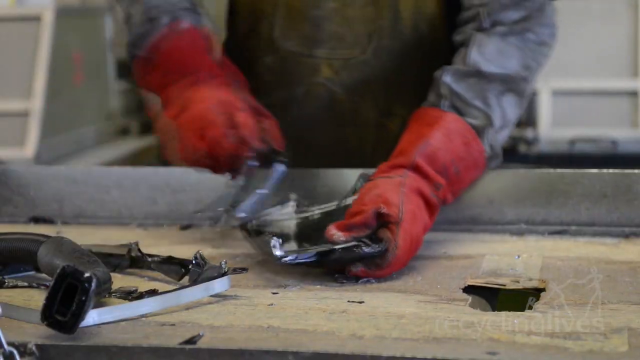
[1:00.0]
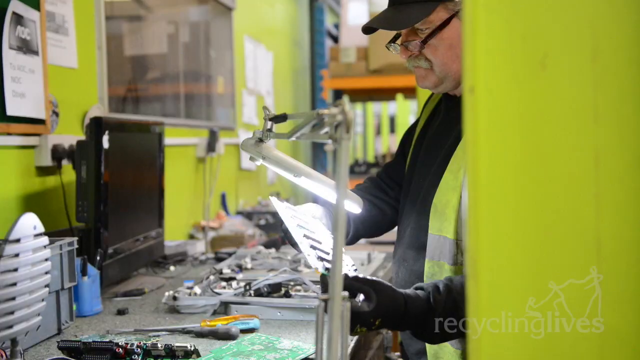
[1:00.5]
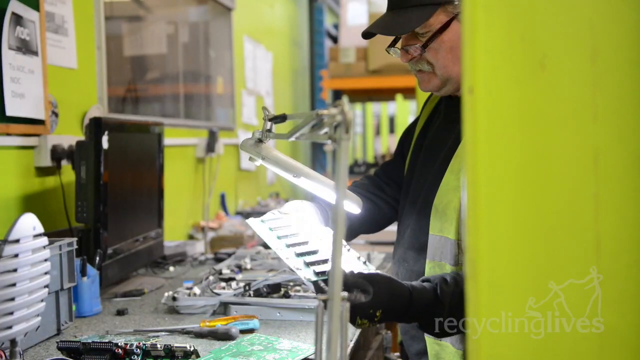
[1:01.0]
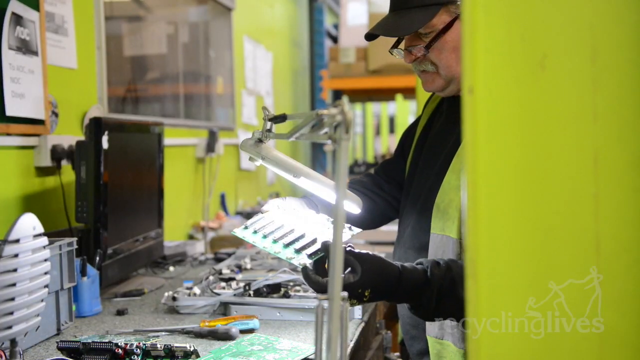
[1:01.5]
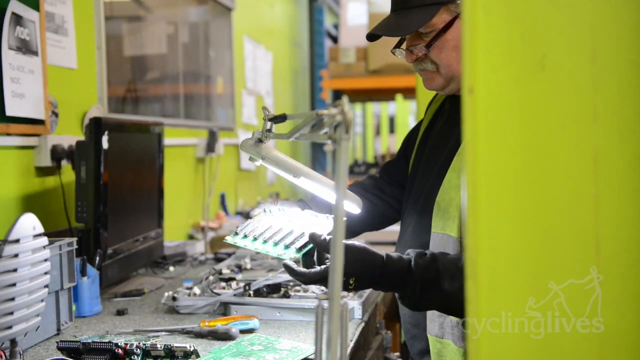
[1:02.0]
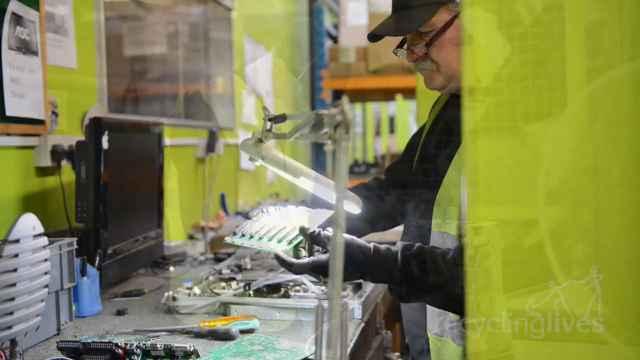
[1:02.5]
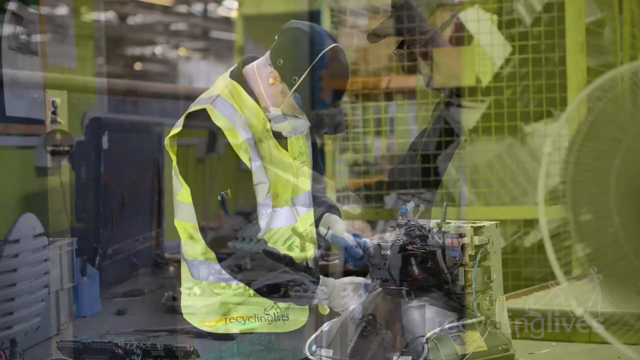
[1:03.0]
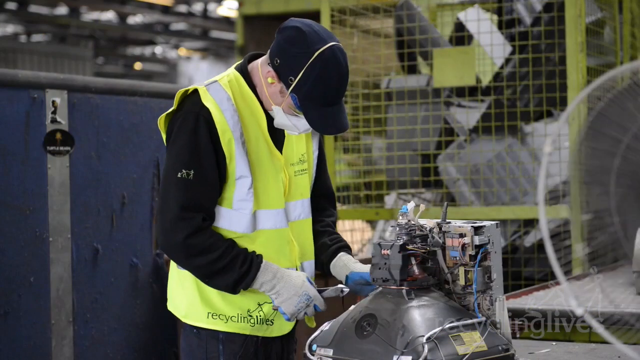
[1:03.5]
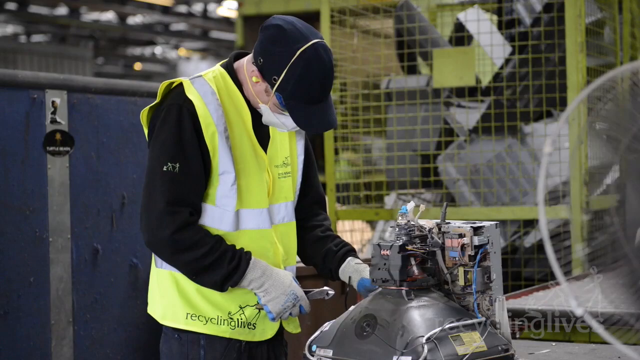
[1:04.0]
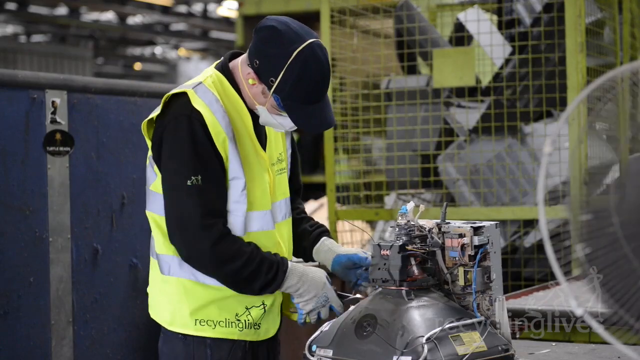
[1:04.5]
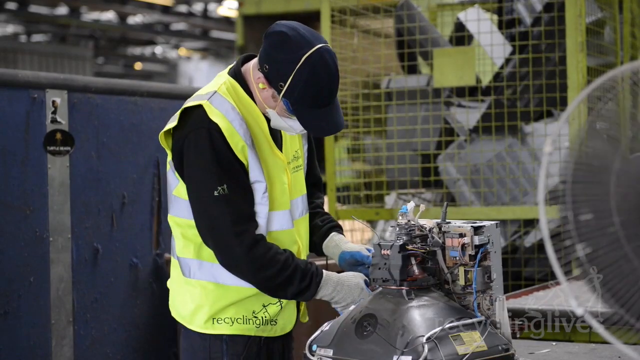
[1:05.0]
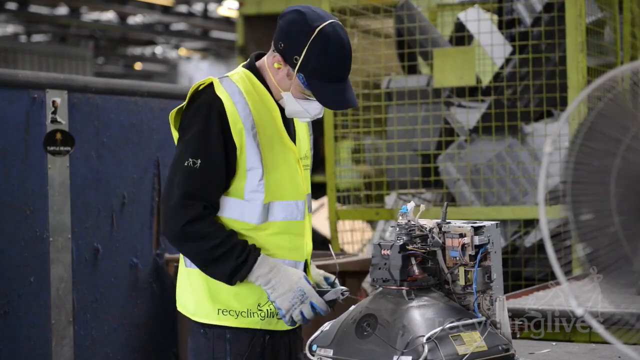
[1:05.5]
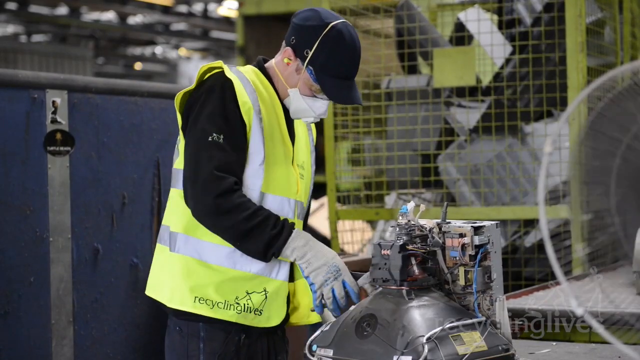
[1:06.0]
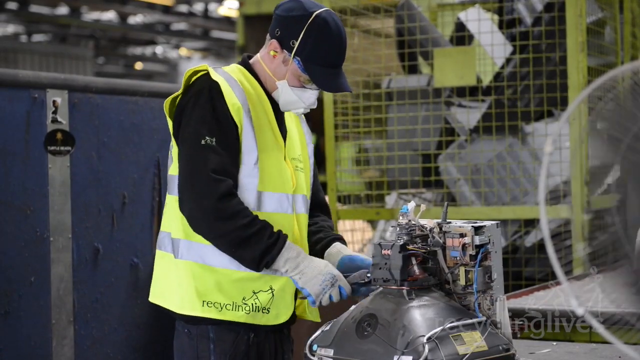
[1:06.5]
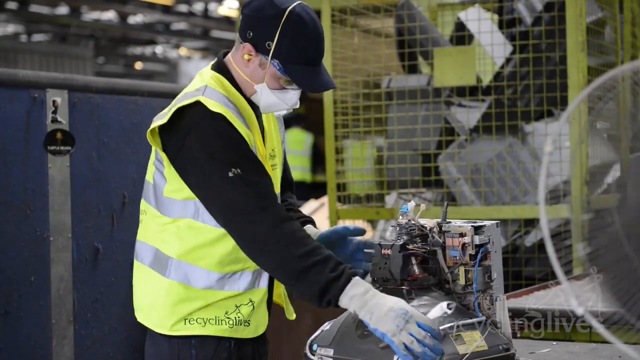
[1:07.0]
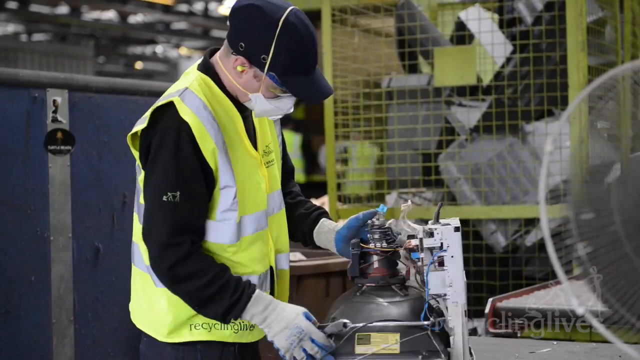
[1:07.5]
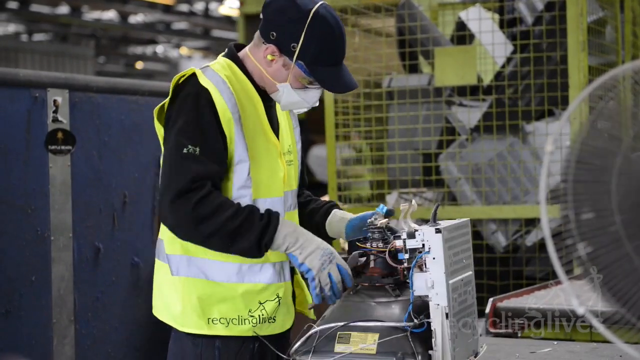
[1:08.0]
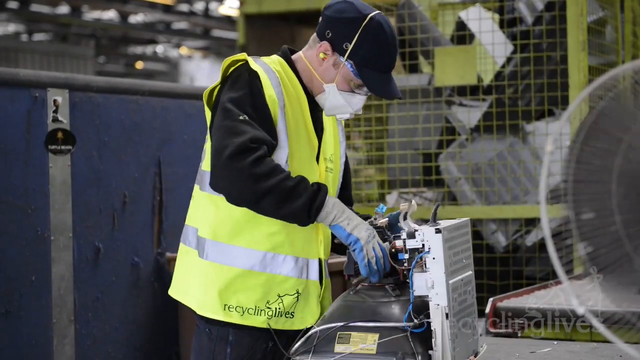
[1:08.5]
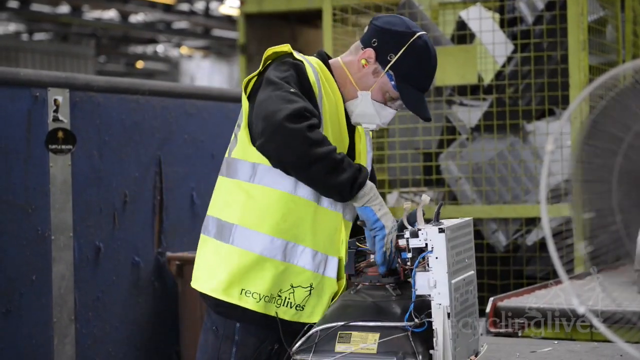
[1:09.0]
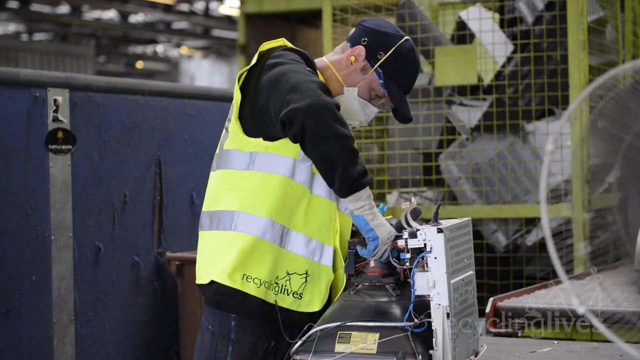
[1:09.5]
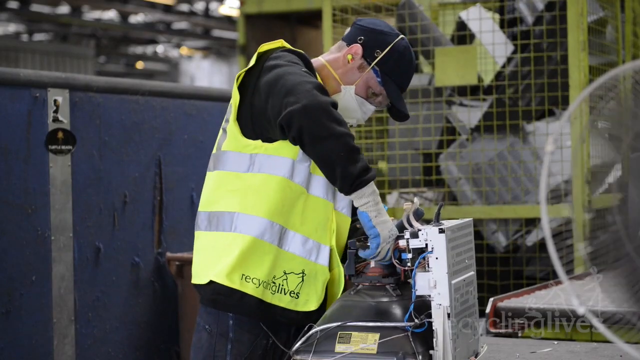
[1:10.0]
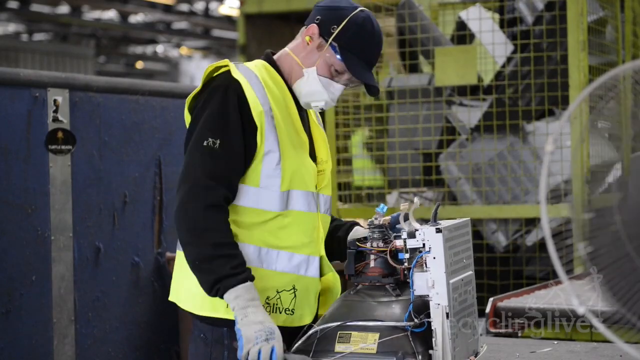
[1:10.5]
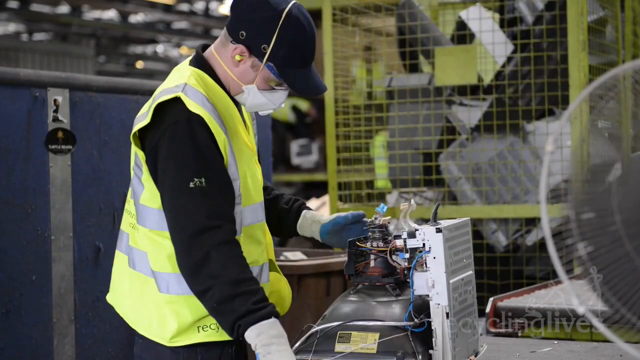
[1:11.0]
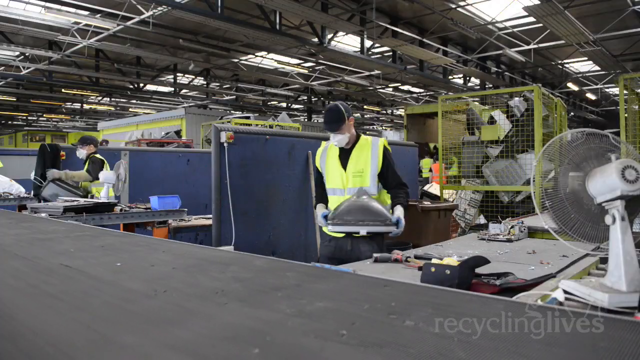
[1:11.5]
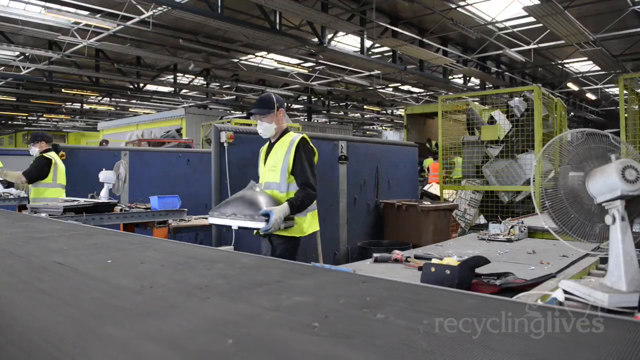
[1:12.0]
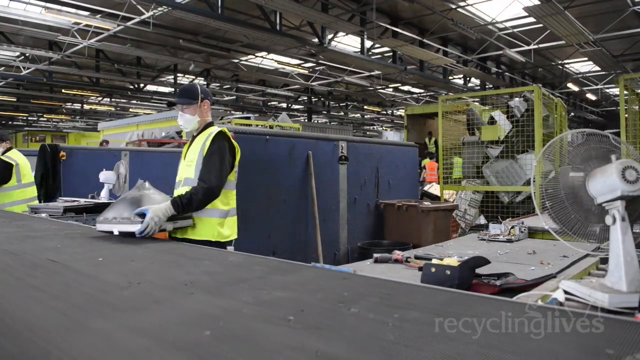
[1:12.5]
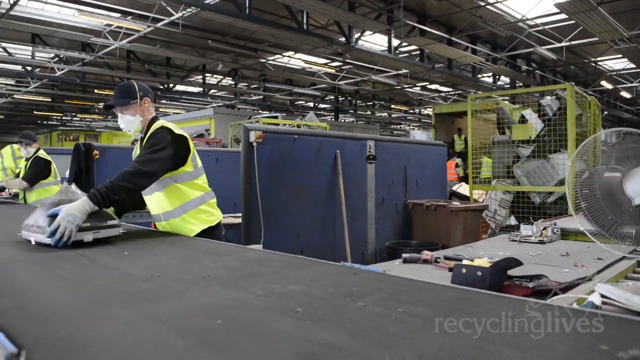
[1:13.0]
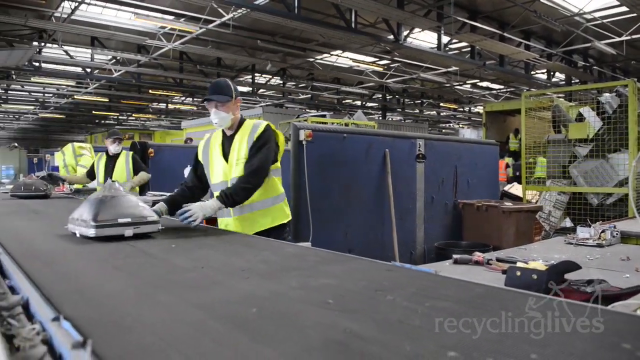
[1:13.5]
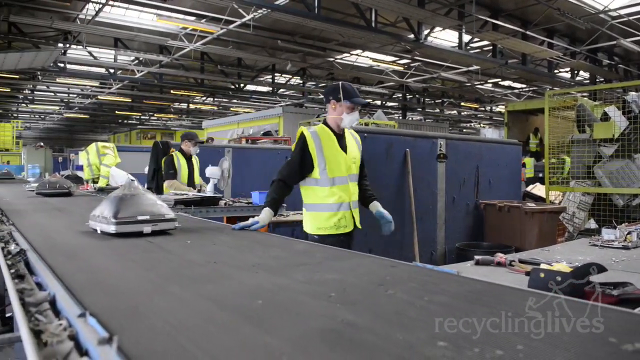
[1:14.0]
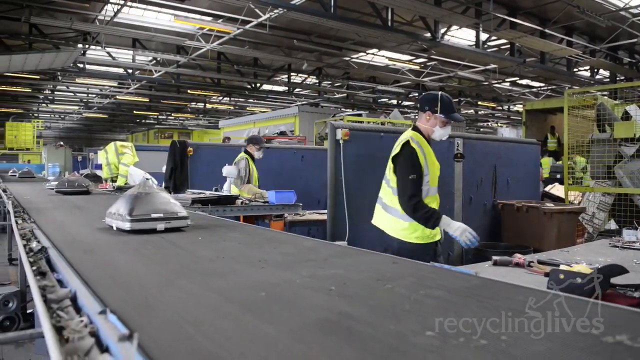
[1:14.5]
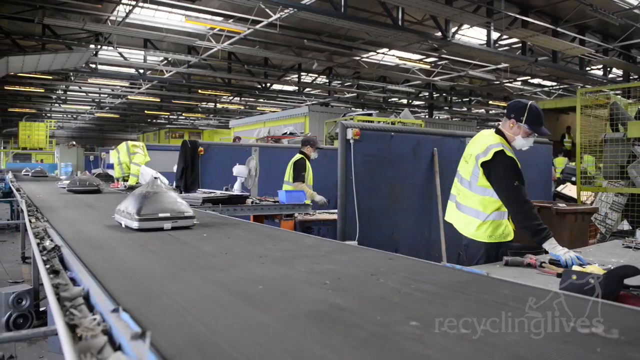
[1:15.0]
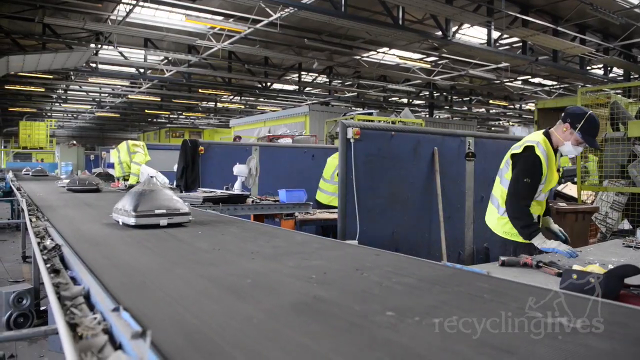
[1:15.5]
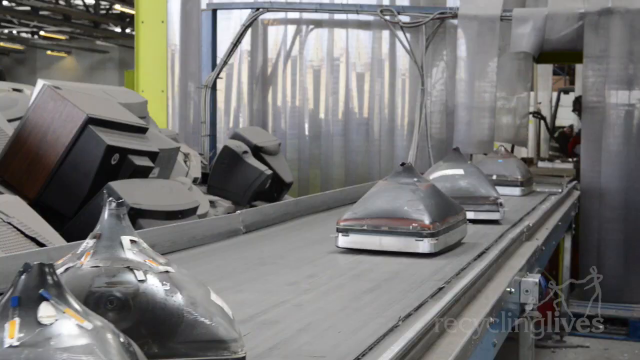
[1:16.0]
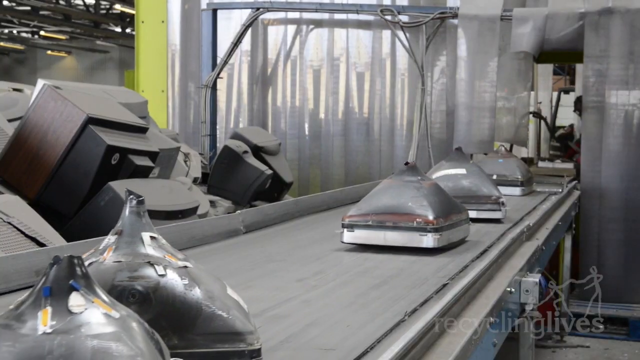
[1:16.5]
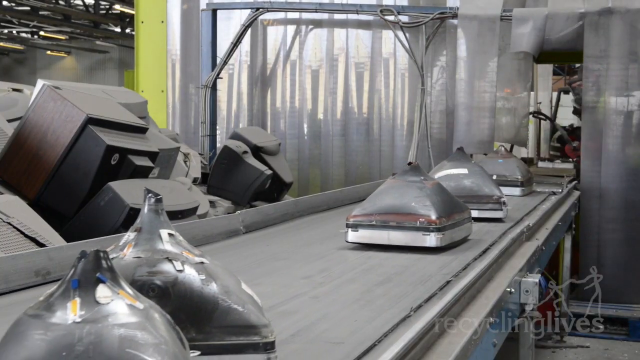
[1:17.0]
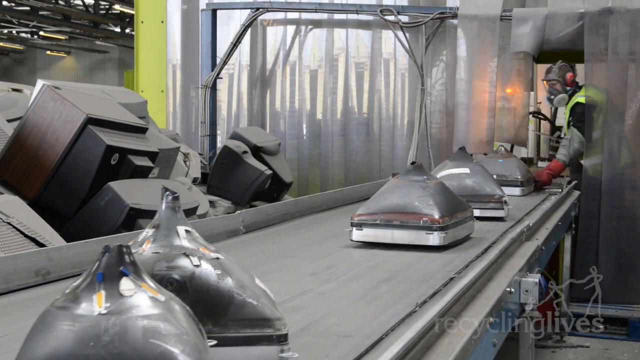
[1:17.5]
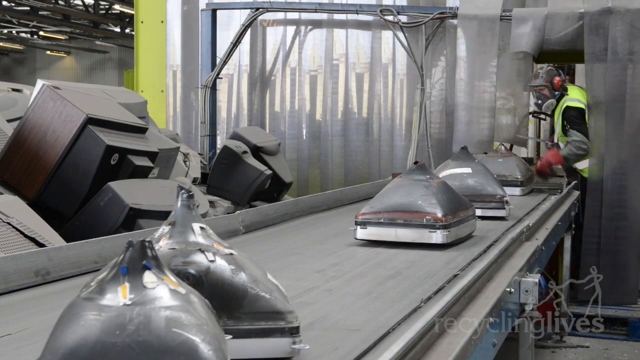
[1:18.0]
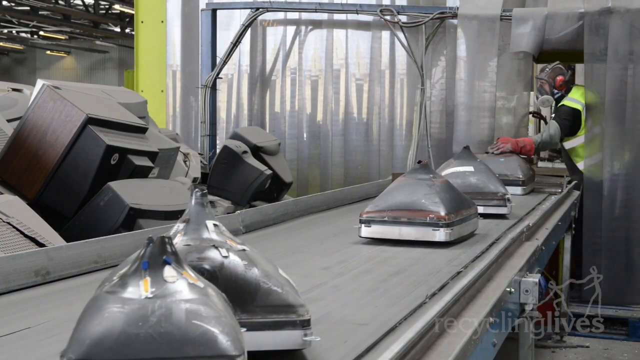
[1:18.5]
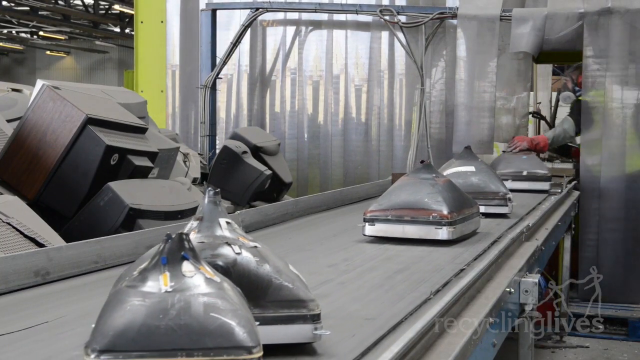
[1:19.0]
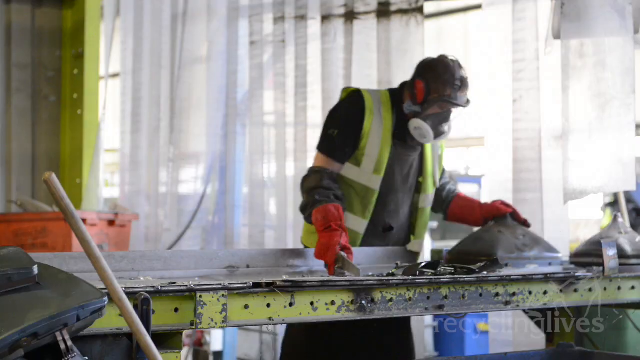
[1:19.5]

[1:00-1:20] Somebody wearing heavy red gloves takes apart the inside of a TV in a warehouse setting. Next, a man wearing glasses, a black shirt, black gloves, a yellow and gray safety vest and a black ball cap holds part of a TV component under some kind of really bright light, turning it around. What appears to be a black computer screen is in front of him, and the walls around him are bright yellow. Another man, wearing a face mask, a black ball cap, the same yellow and gray safety vest, a black shirt and gray gloves, clips wires inside an old TV set whose casing has been taken off, using a pair of pliers and squeezing really hard. He turns it around and clips more wires on the other side, then carries it over to a conveyor belt that already holds some other sets. The belt moves slowly down the line. Another worker wearing red gloves grabs the ones at the end and takes them off, then looks like he has a knife or something, as if about to cut it open. In one scene a round fan whirs to the right. People walk around in the background in the same vests; one person wears an orange vest, but most vests are yellow and gray.